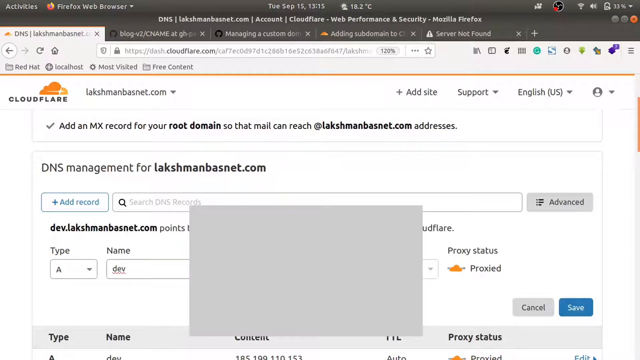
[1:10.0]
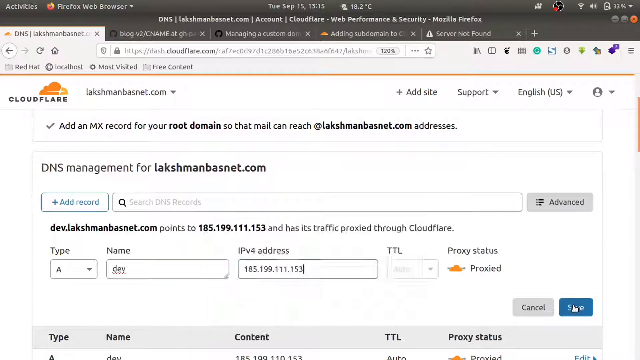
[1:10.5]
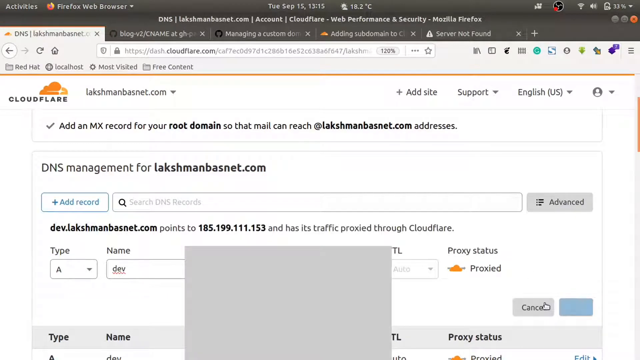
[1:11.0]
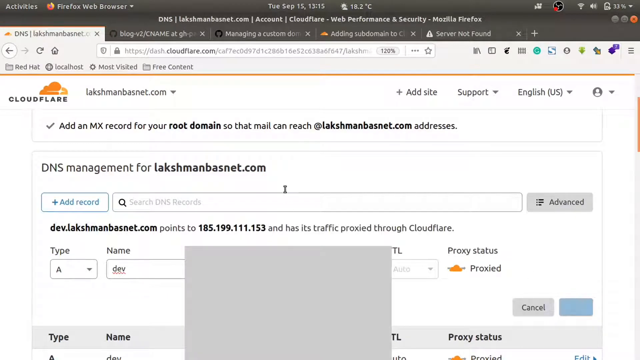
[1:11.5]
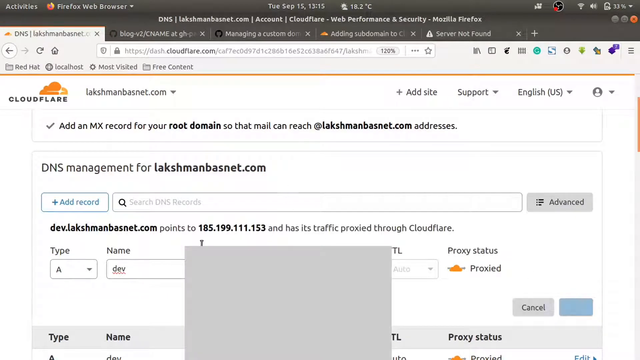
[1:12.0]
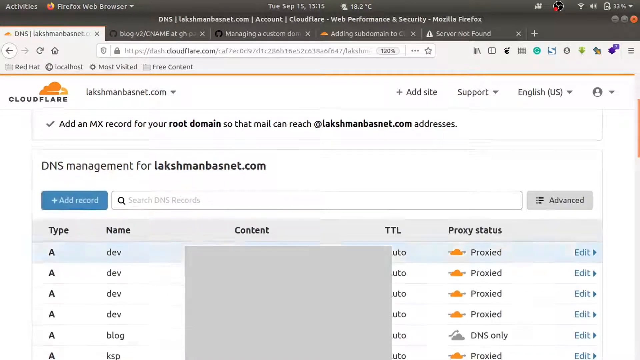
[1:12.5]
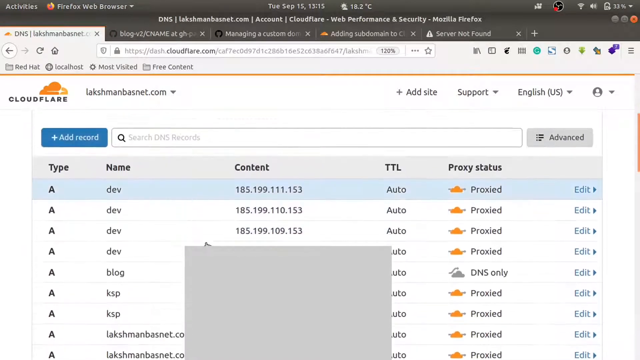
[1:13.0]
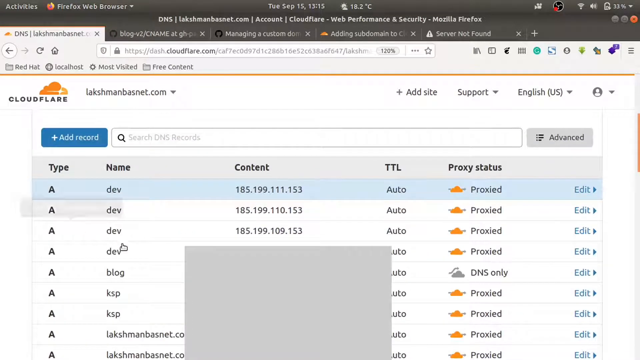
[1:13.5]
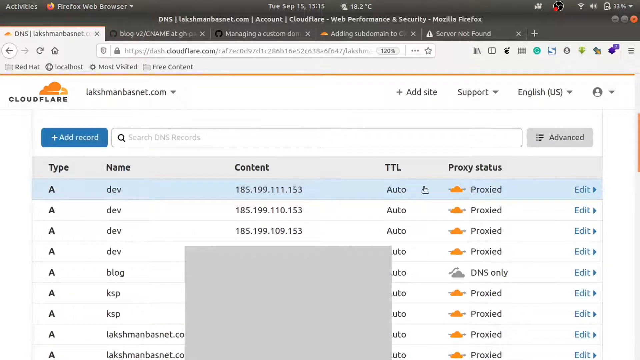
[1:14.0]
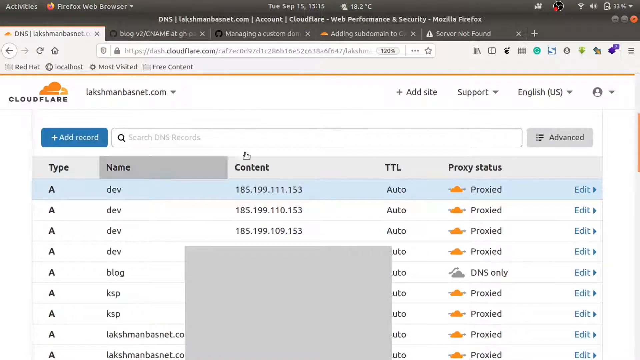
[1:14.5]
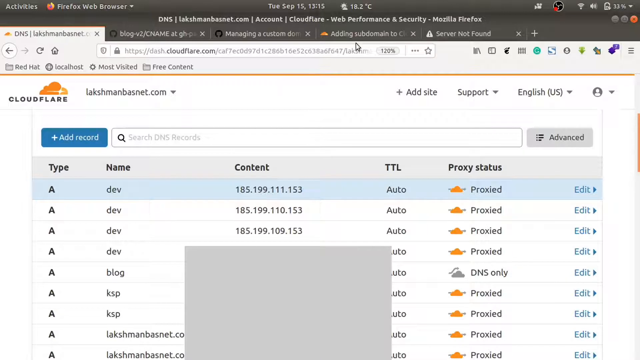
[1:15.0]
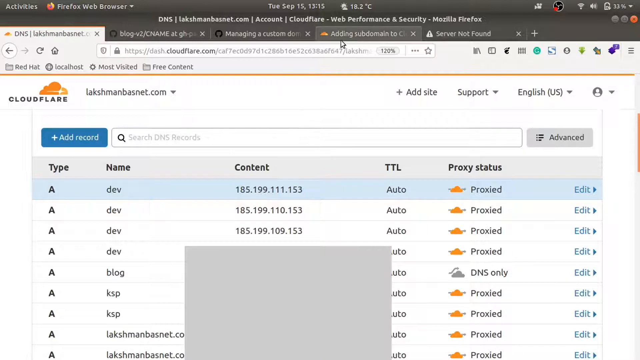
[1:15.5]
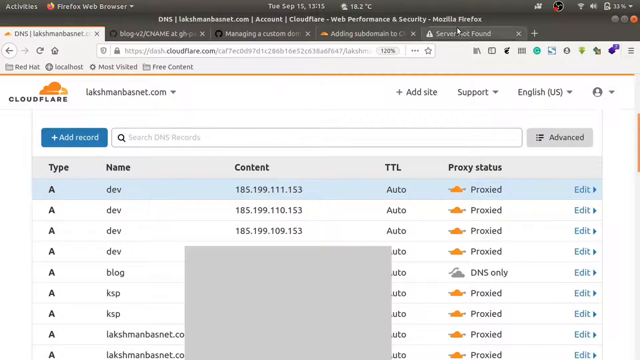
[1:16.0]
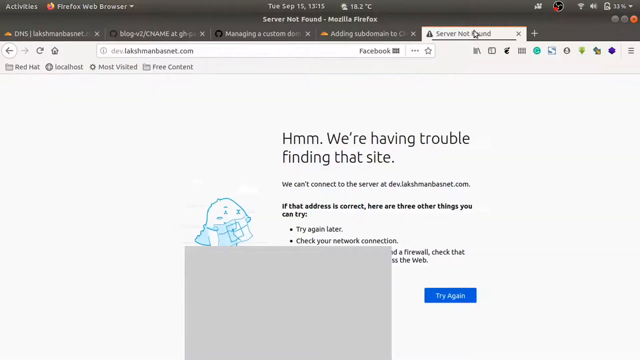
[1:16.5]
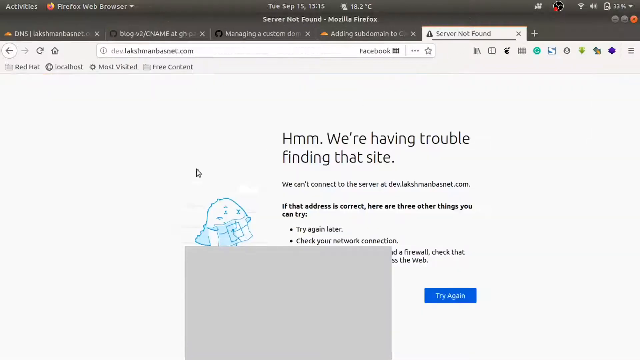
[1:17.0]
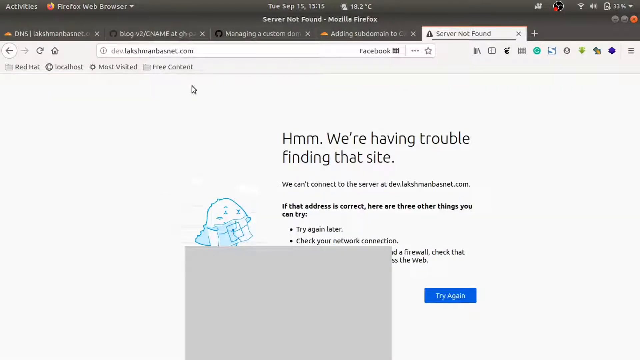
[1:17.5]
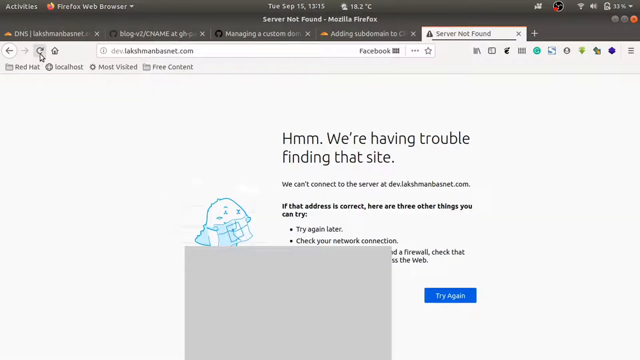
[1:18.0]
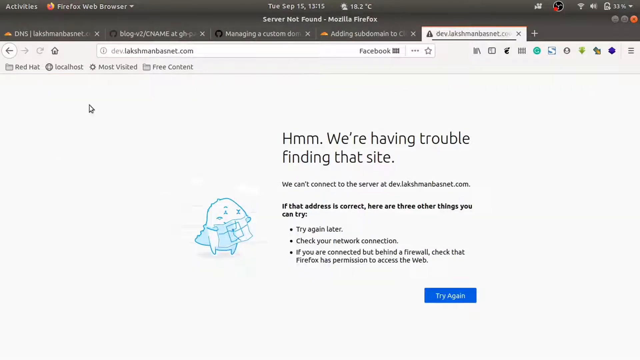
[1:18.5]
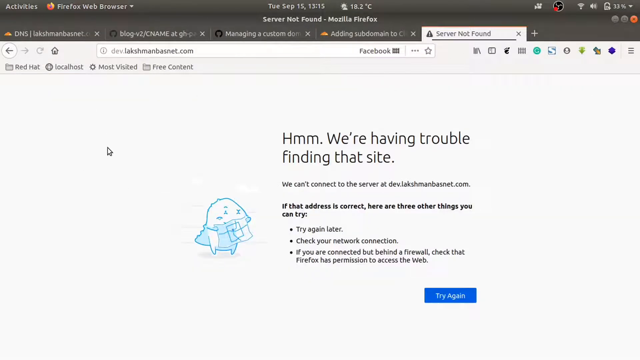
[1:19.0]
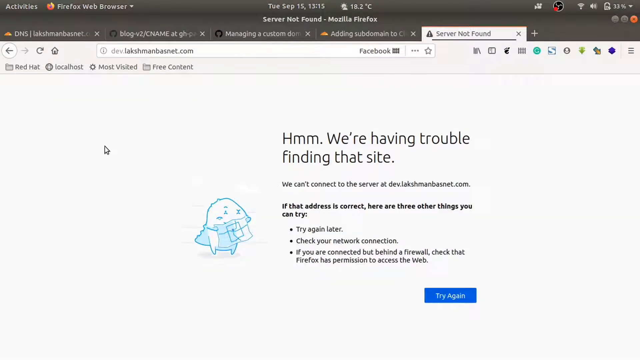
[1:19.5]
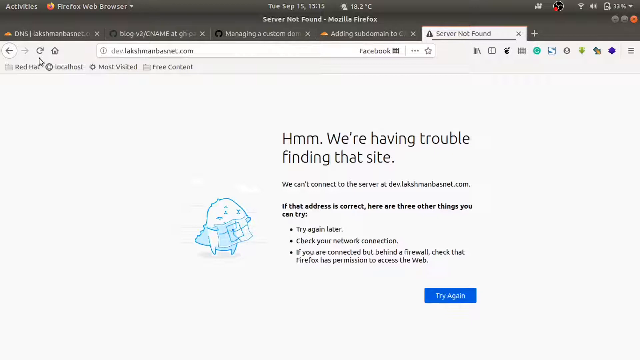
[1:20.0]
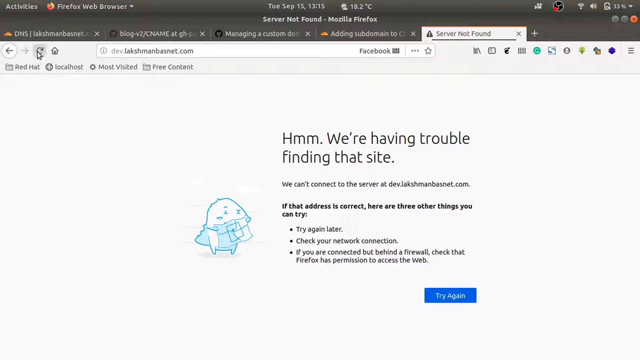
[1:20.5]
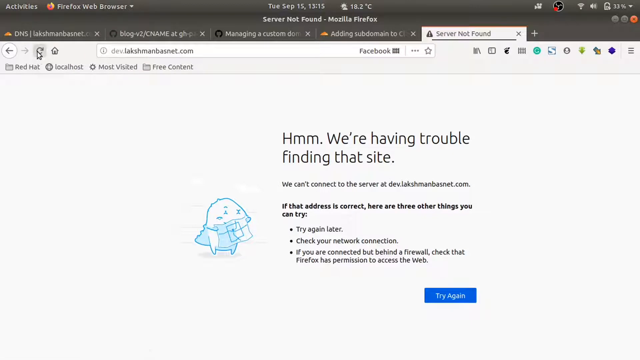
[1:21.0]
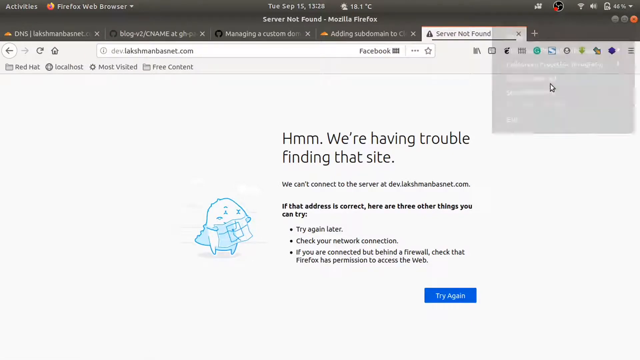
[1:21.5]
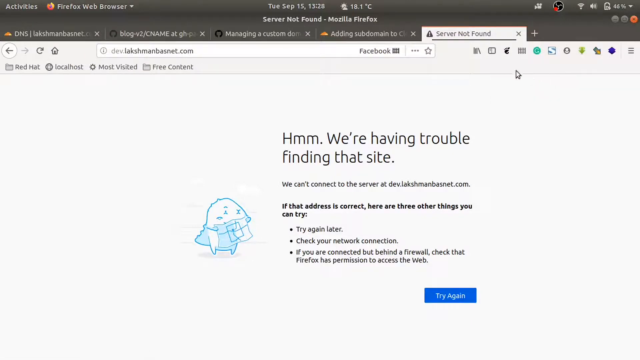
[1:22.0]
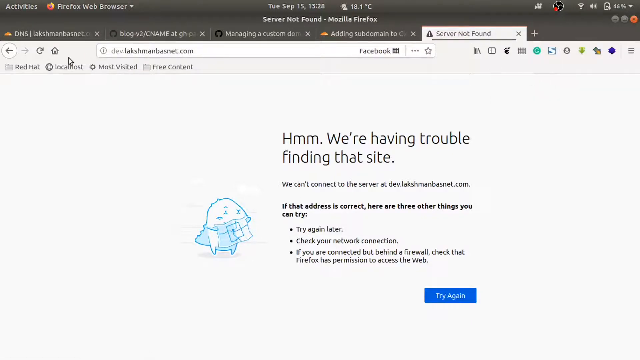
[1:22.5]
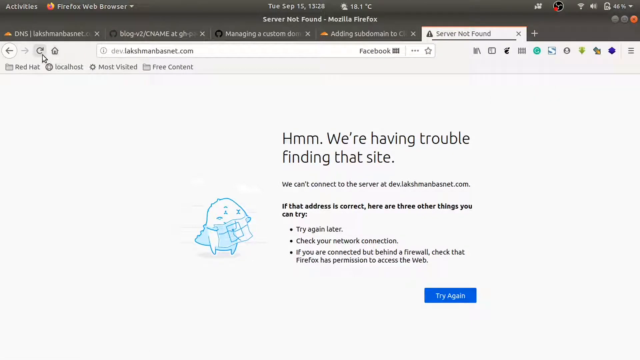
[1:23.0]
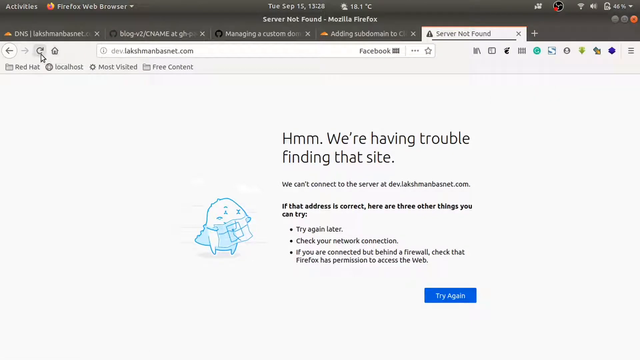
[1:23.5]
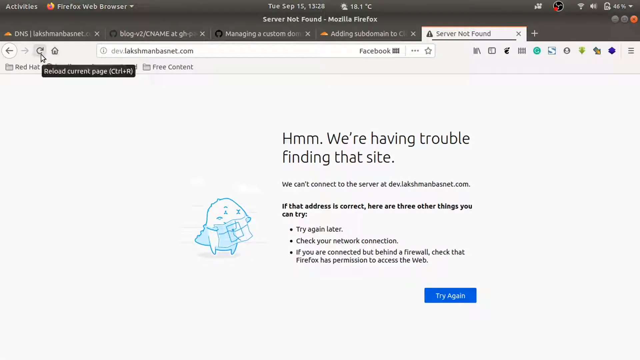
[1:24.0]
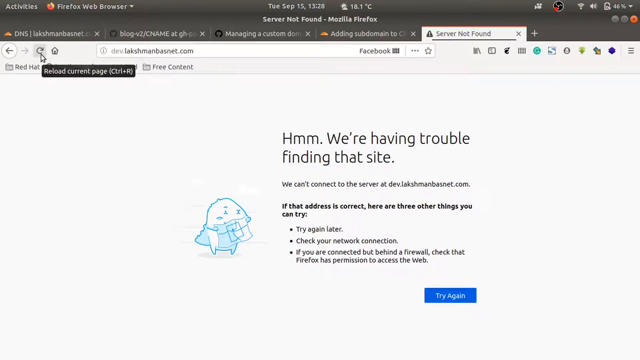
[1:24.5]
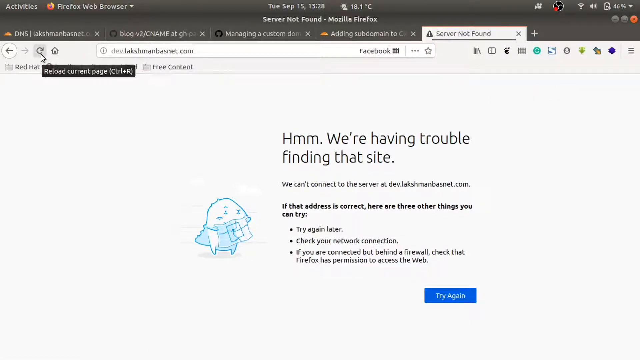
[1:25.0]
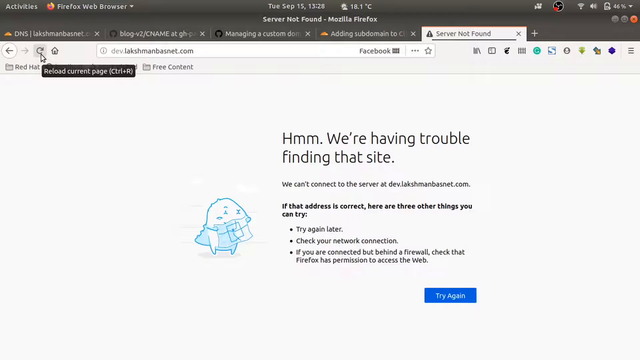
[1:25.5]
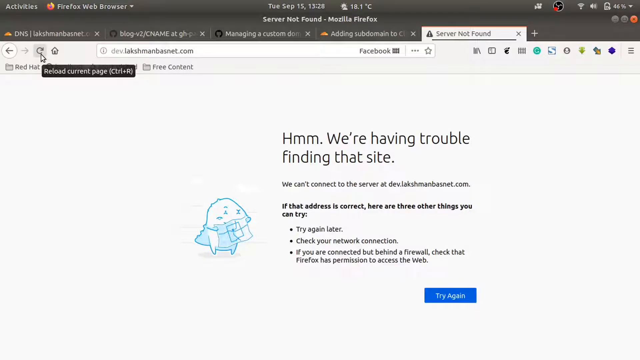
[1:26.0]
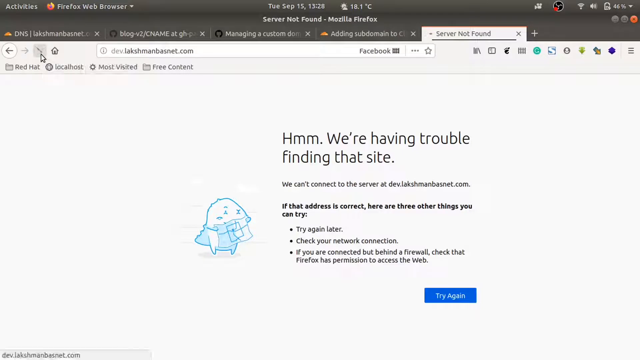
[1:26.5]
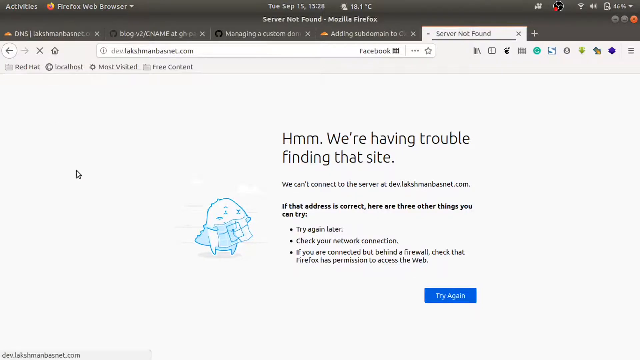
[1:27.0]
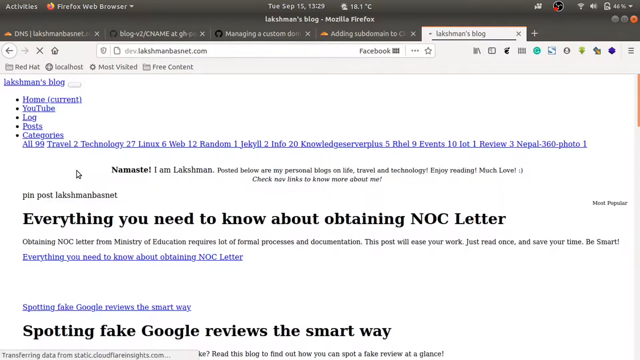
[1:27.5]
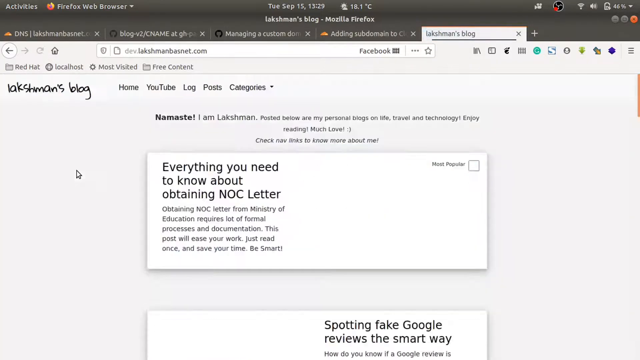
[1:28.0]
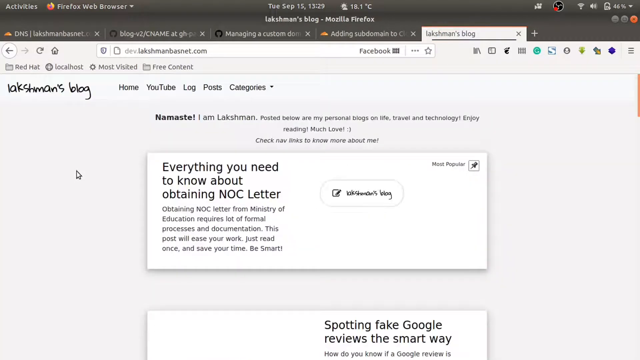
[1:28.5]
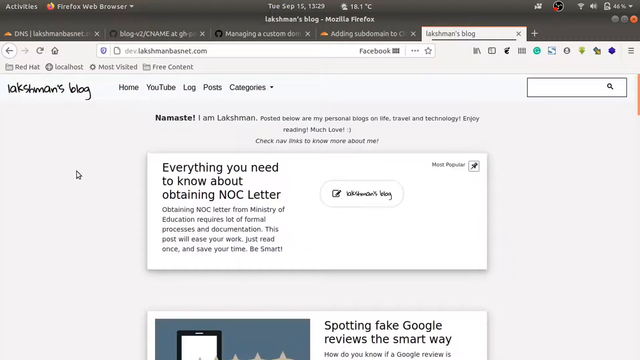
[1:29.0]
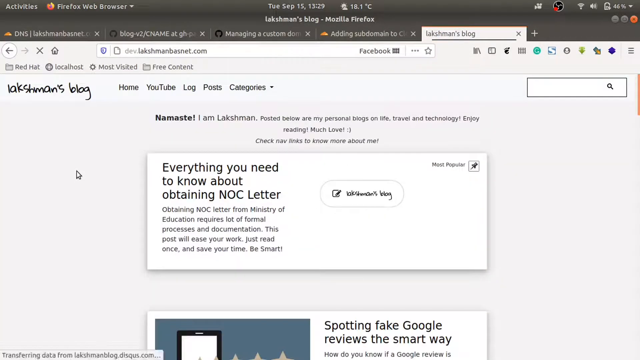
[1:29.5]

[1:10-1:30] On the Cloudflare website, the man adds a new record of type A with the name dev, the IP address as content, TTL set to auto and proxy status proxied. There is an edit option on the right side. He is using Linux, OBS is live, and the date shows Tuesday, September 15th. In the Firefox web browser he goes to a "Server not found" page reading "We are having trouble finding the server. If that address is correct, here are other things you can try." He refreshes and it still does not work; he keeps refreshing, and after some time the page loads Lakshman's blog, with options for Home, YouTube and Blog and the text "Greetings, namaste, I am Lakshma."